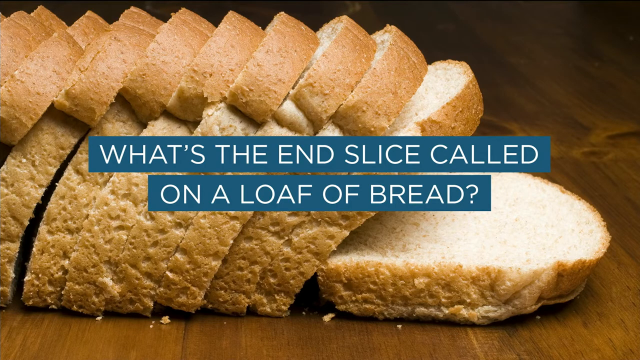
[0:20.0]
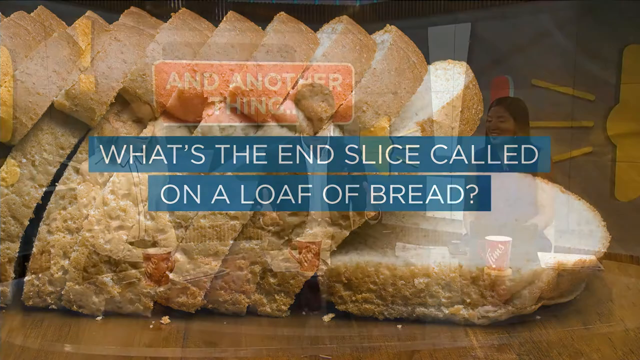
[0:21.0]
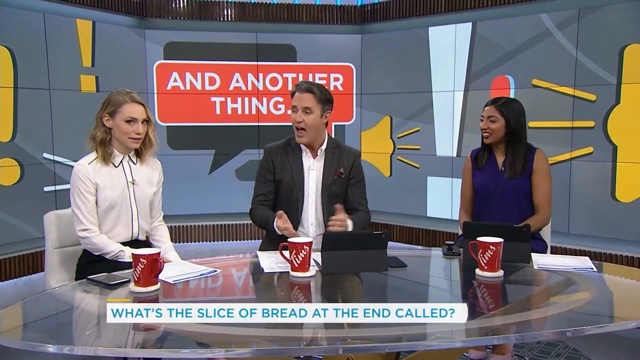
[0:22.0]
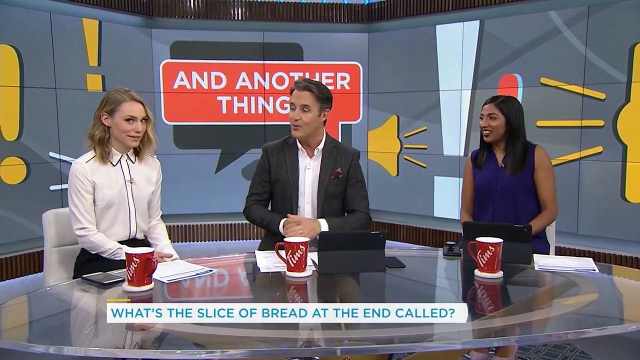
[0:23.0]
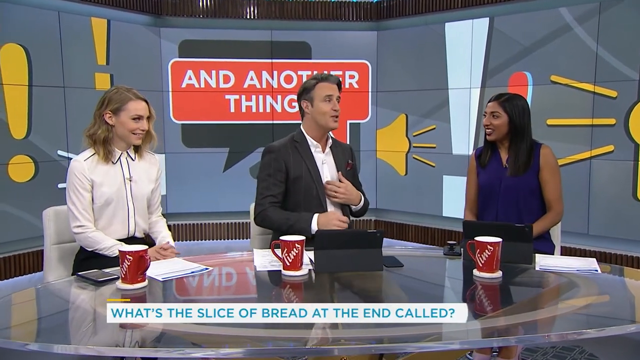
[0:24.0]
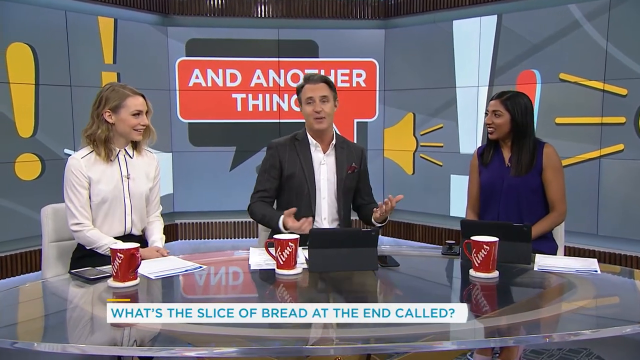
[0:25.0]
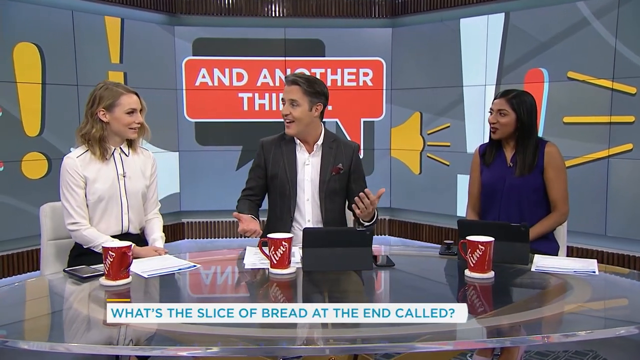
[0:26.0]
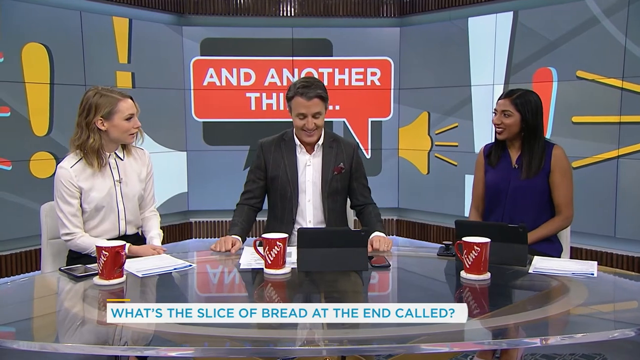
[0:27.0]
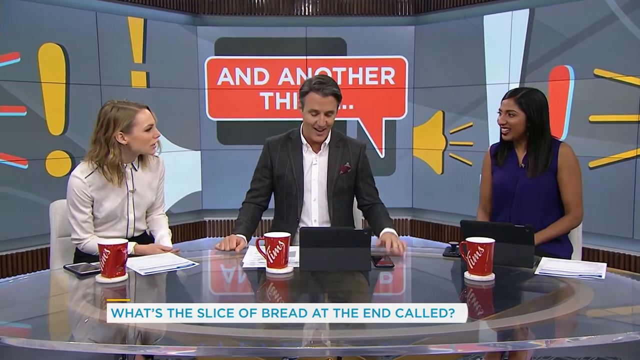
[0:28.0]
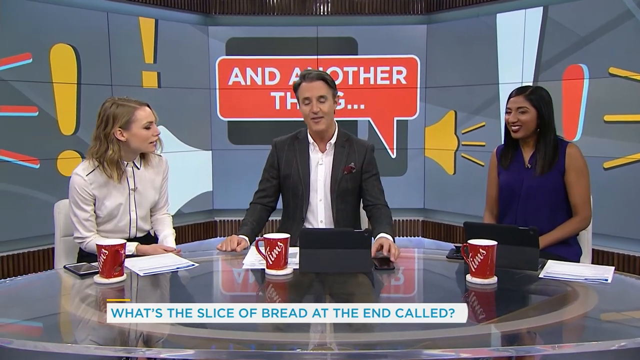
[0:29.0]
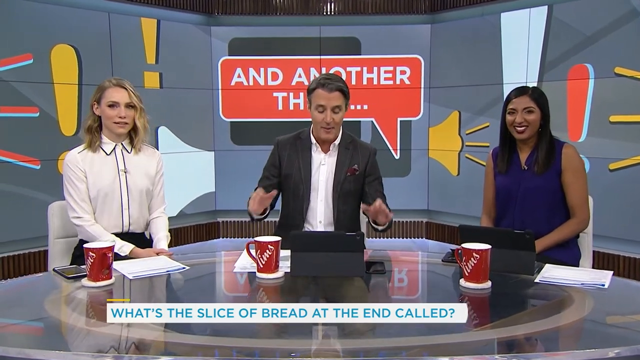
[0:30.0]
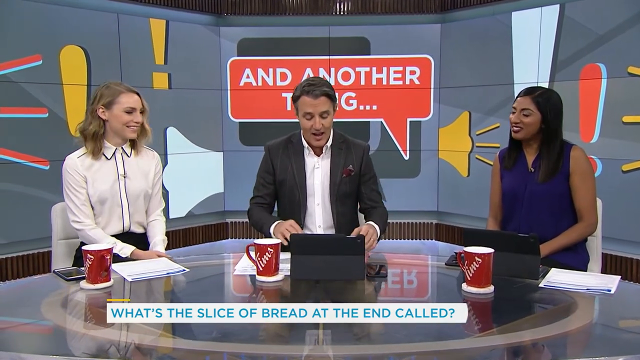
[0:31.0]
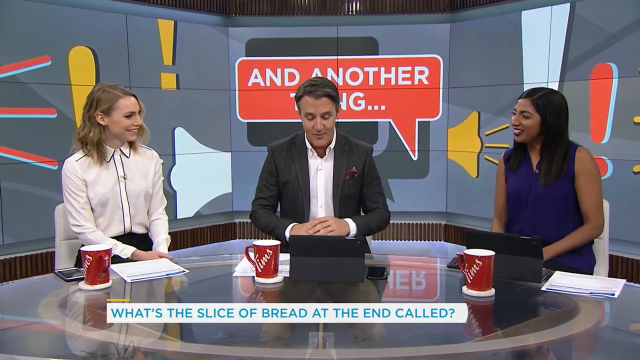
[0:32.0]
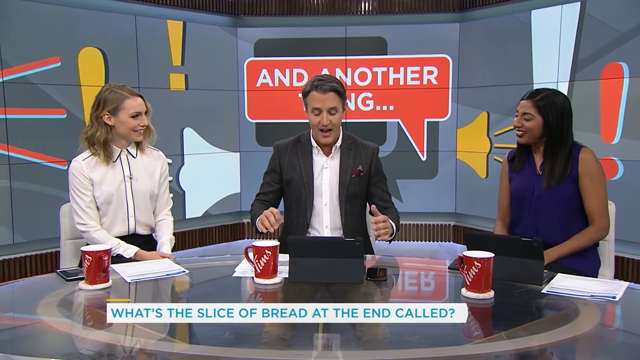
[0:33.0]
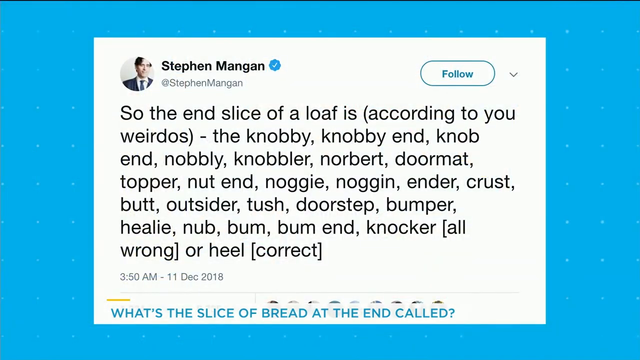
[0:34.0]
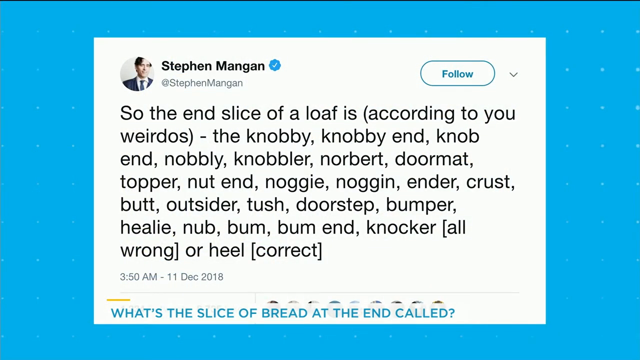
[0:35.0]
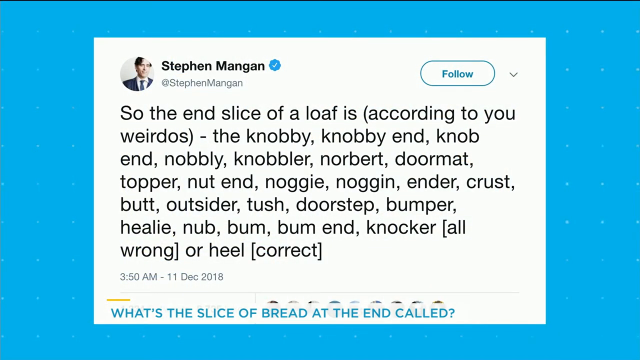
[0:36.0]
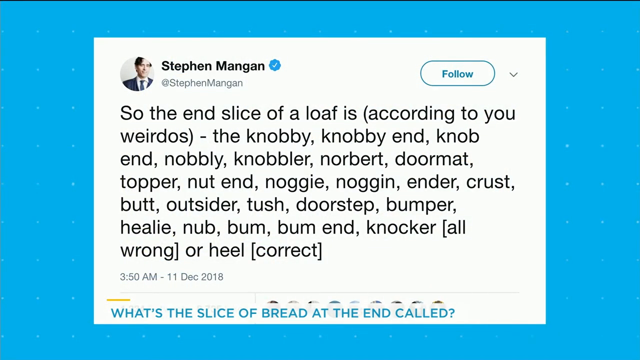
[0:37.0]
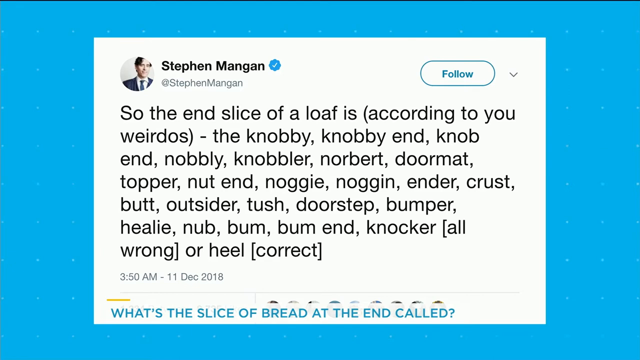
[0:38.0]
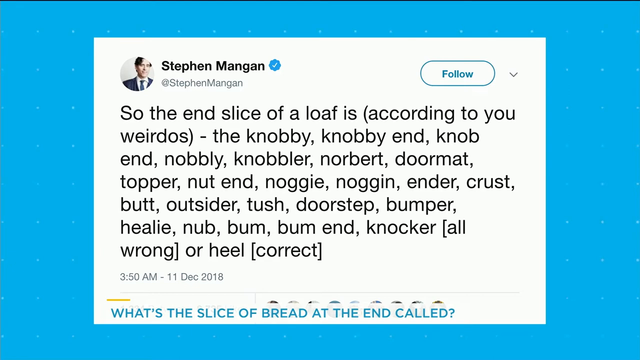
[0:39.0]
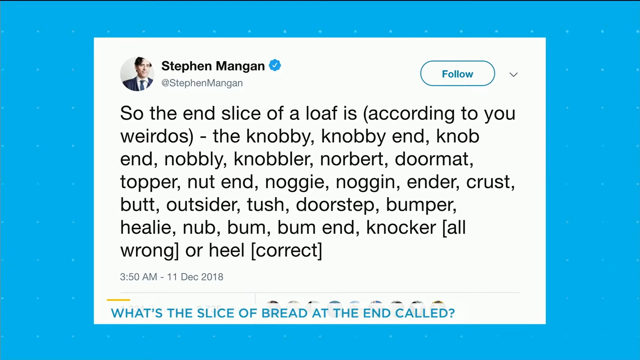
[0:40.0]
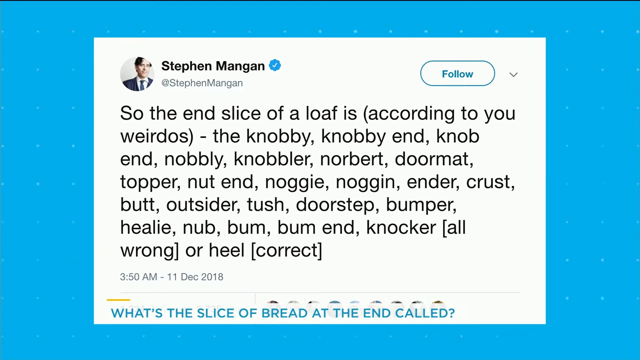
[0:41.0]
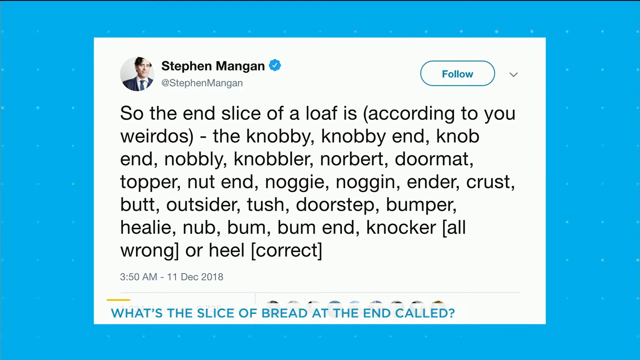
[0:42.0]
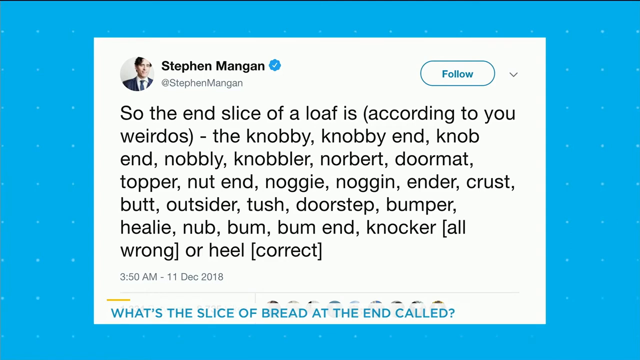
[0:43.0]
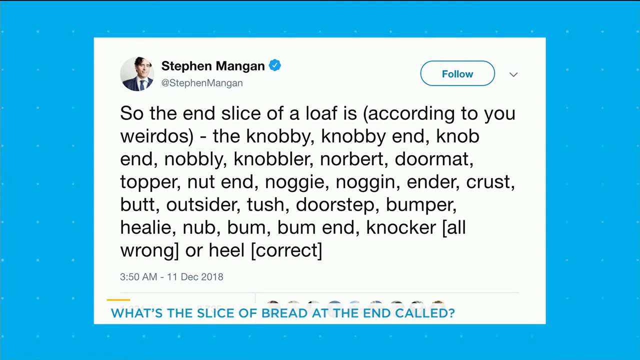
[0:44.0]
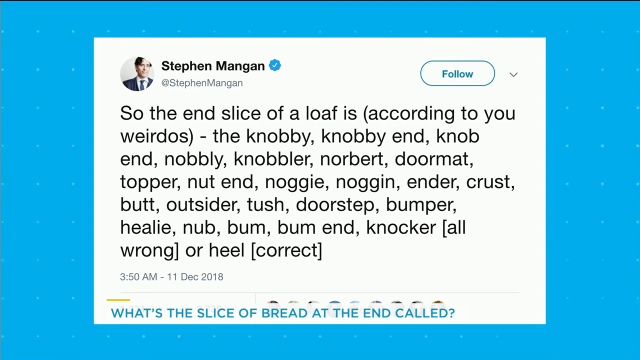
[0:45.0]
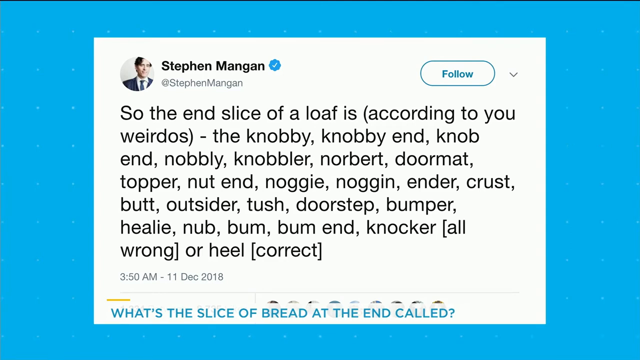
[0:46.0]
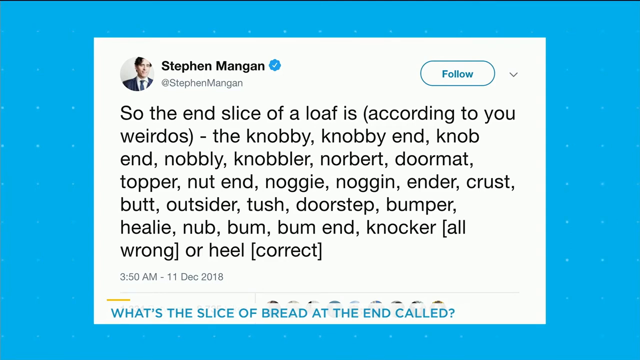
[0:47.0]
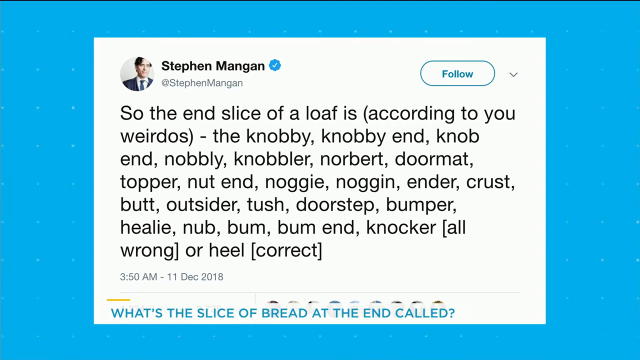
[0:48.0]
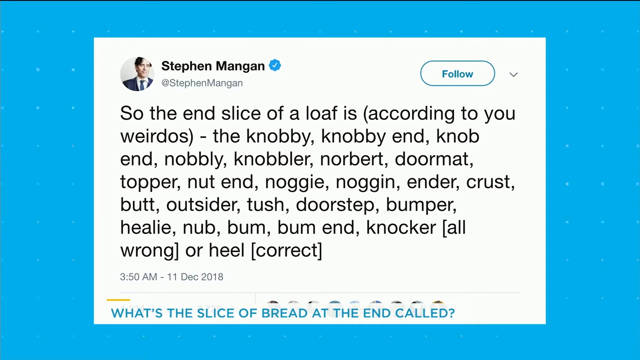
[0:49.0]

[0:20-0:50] Text appears in white writing in a blue box on two lines. The sliced loaf shows about nine slices, including the heel, which lies down. The video goes back to the man, who gestures and points to himself. Text at the bottom begins "What's the slice of bread". He turns toward the Indian woman and the other woman, who looks down. The woman on the left seems to be laughing and giggling a little, with her hands on her lap, resting on her leg. The tabletop is glass, and the screen is reflected on it. There appears to be a tablet or similar device in black, and to the right there is a keyboard in front of the Indian woman. The video then shows a Twitter post from Stephen Mangan listing about eight different nicknames. It has a light blue background around a white box for the Twitter post, with a blue Follow button to the right of Stephen Mangan's name near the top of the box.